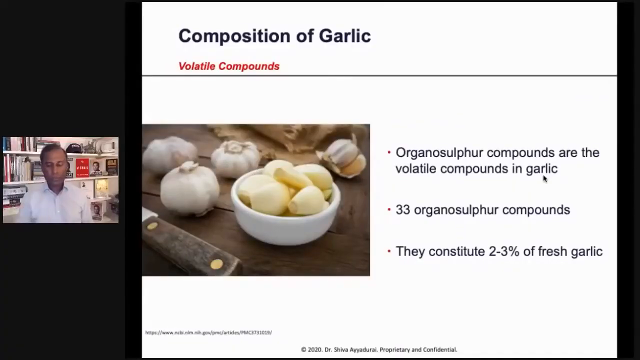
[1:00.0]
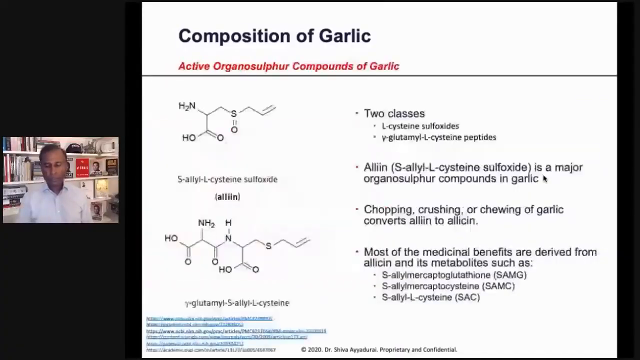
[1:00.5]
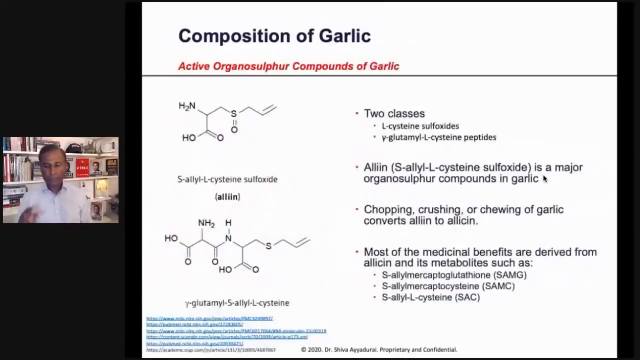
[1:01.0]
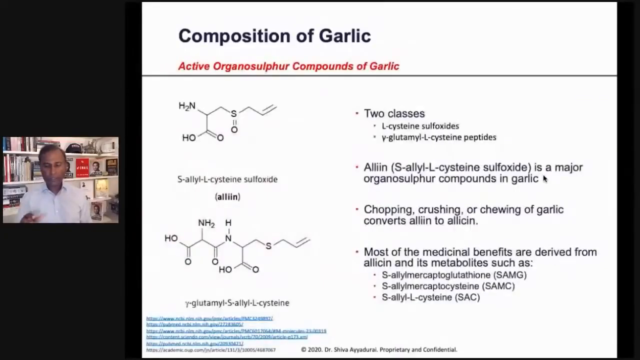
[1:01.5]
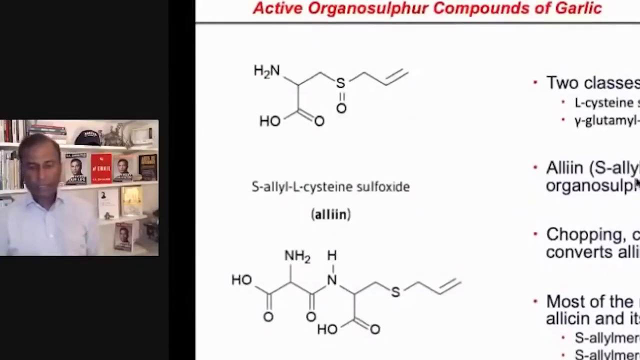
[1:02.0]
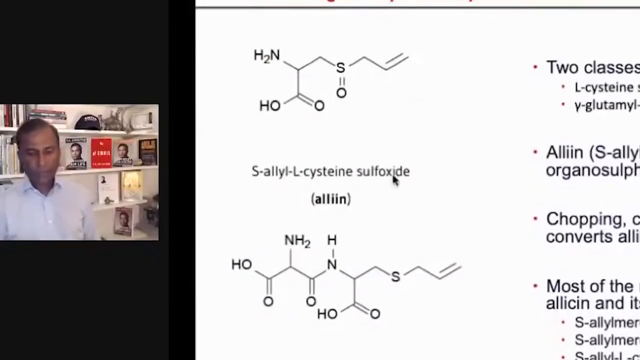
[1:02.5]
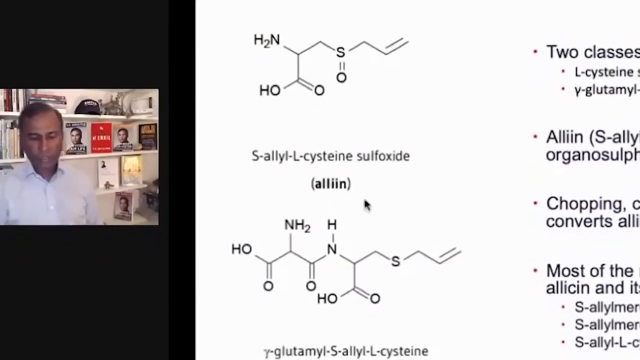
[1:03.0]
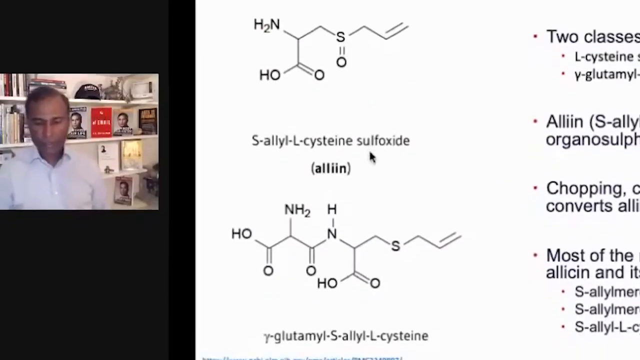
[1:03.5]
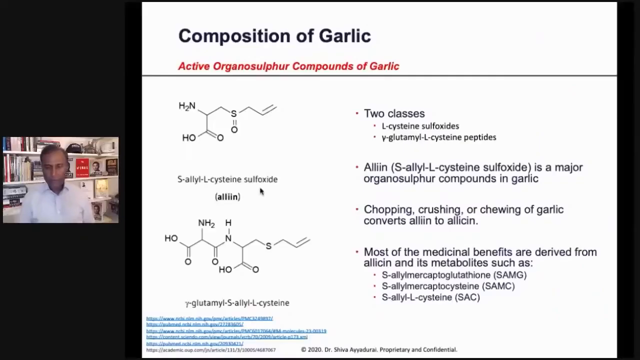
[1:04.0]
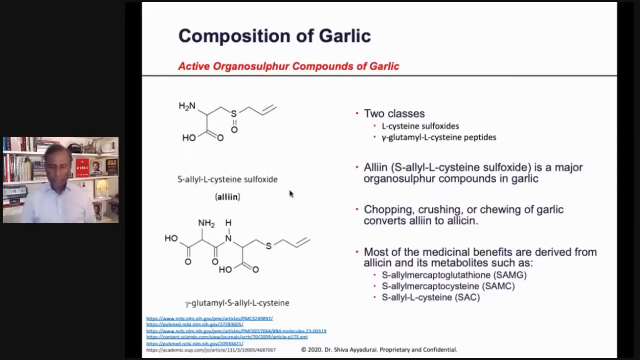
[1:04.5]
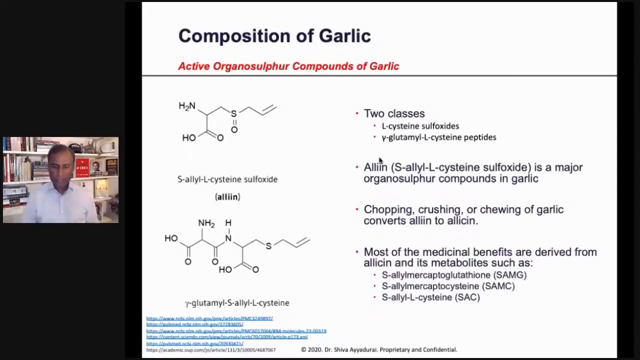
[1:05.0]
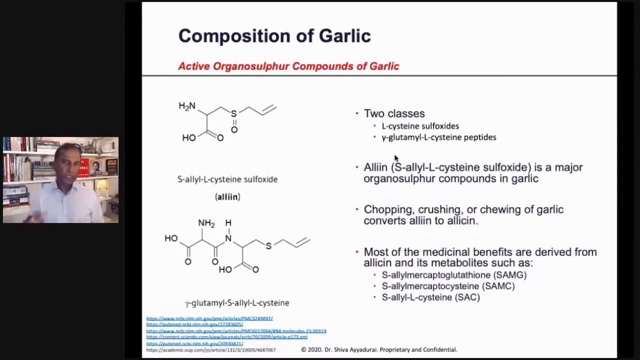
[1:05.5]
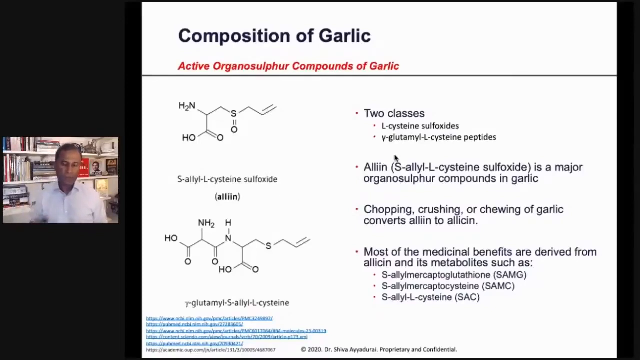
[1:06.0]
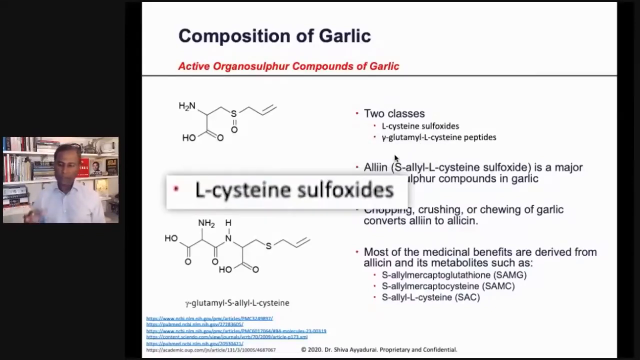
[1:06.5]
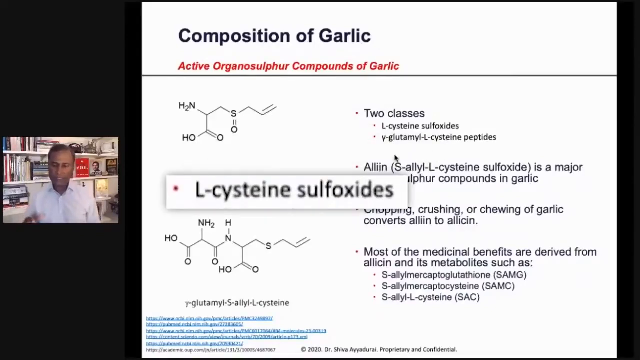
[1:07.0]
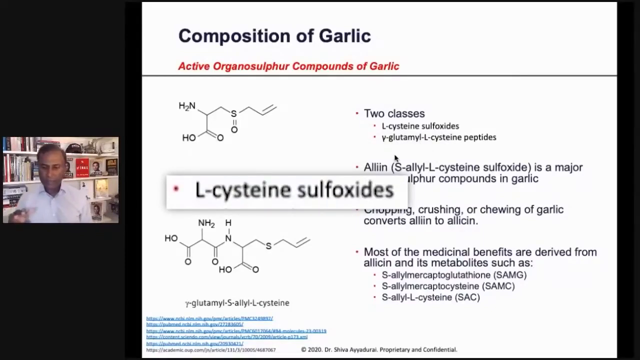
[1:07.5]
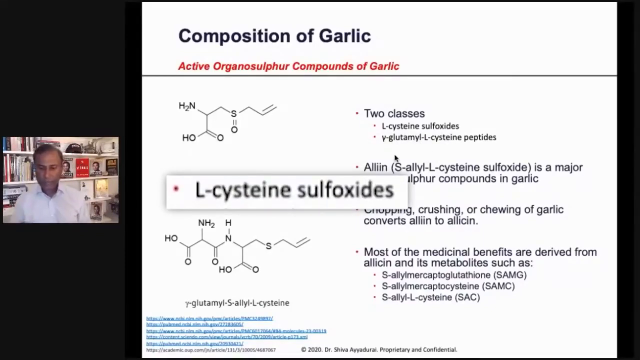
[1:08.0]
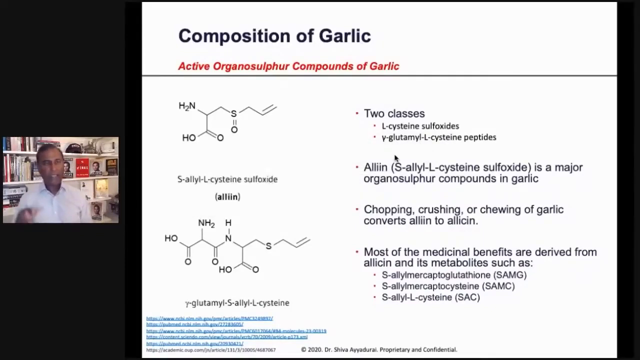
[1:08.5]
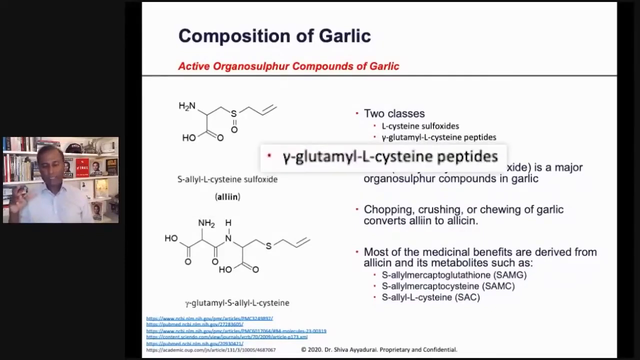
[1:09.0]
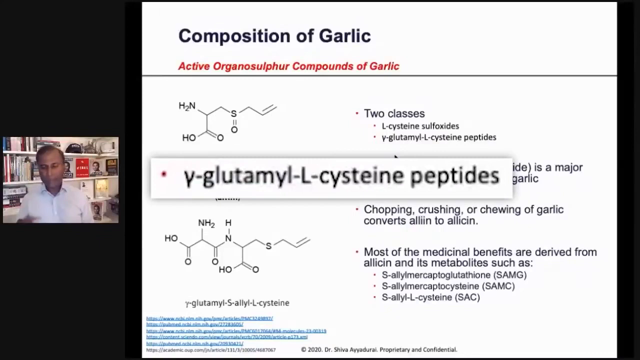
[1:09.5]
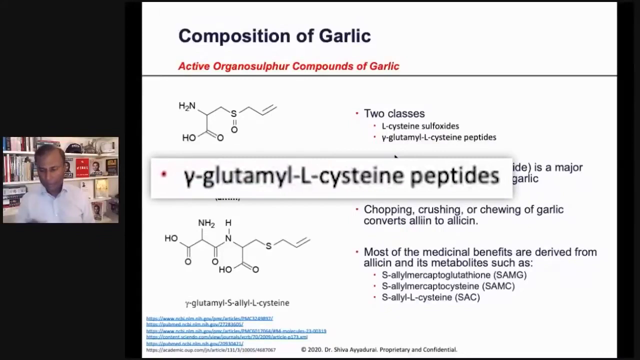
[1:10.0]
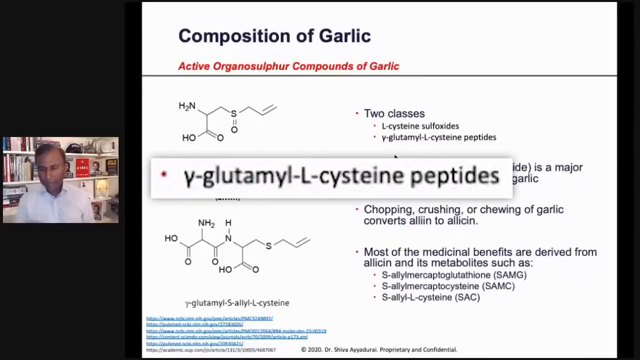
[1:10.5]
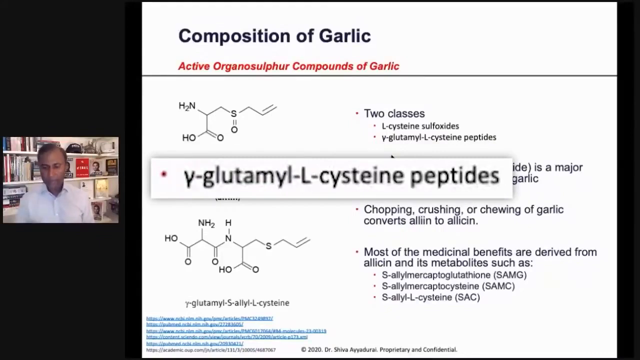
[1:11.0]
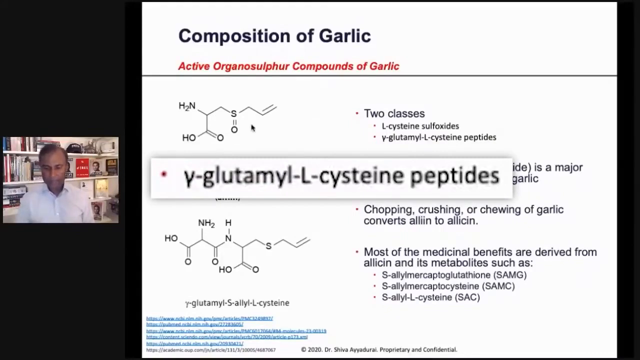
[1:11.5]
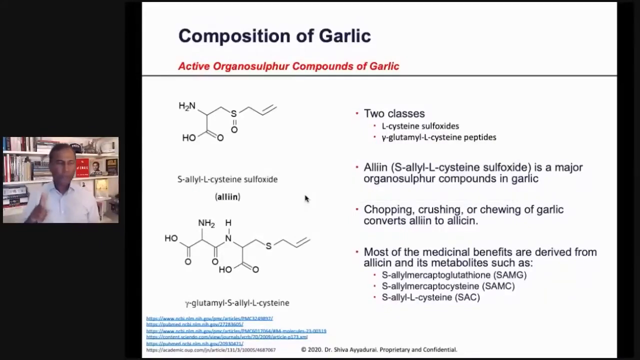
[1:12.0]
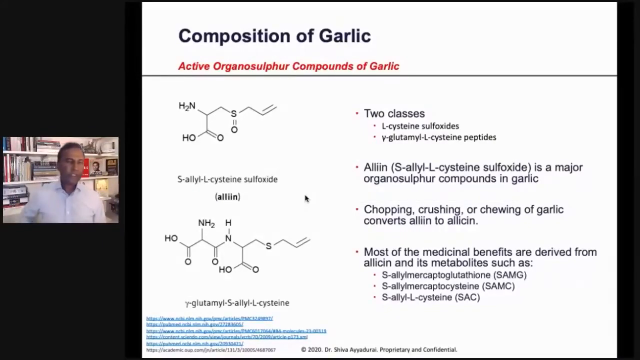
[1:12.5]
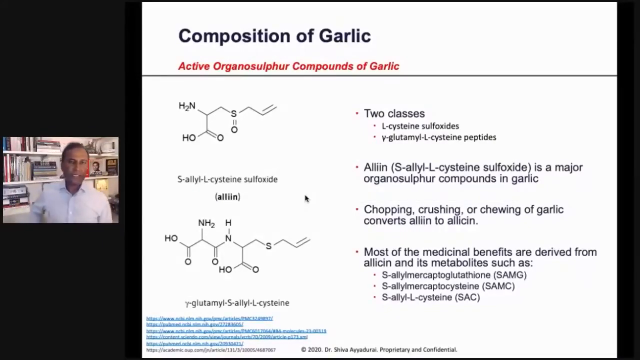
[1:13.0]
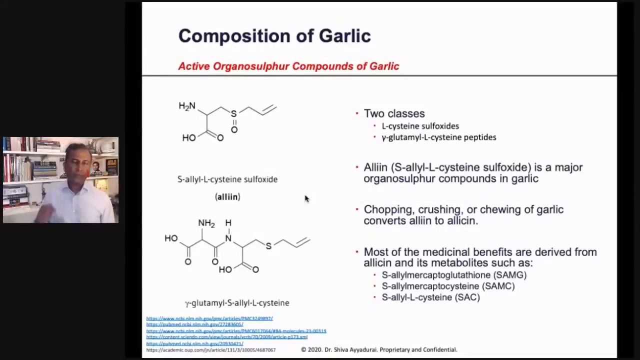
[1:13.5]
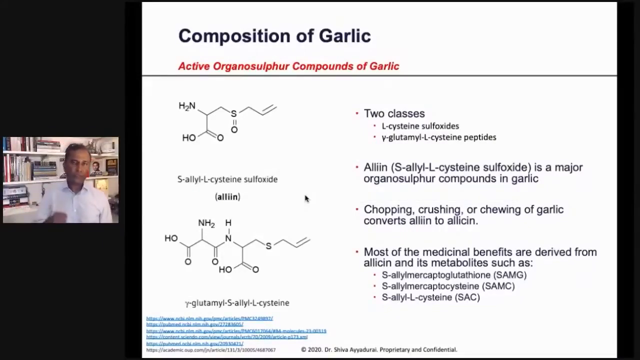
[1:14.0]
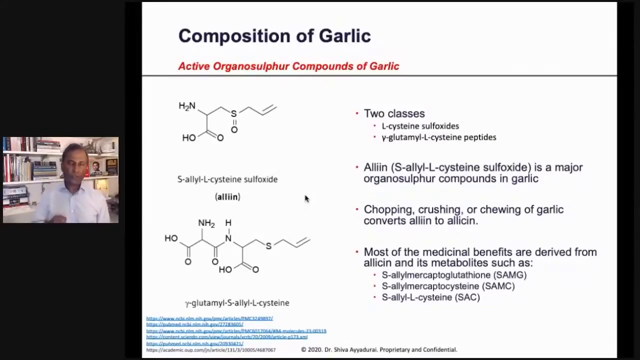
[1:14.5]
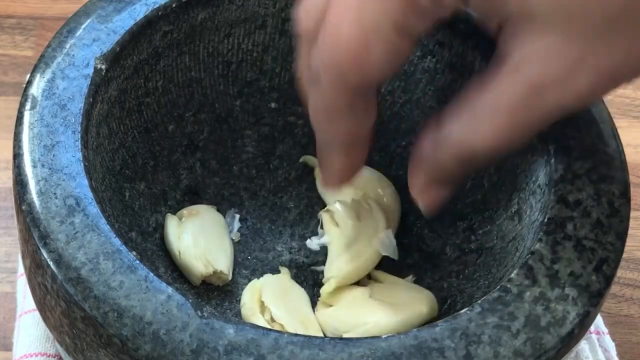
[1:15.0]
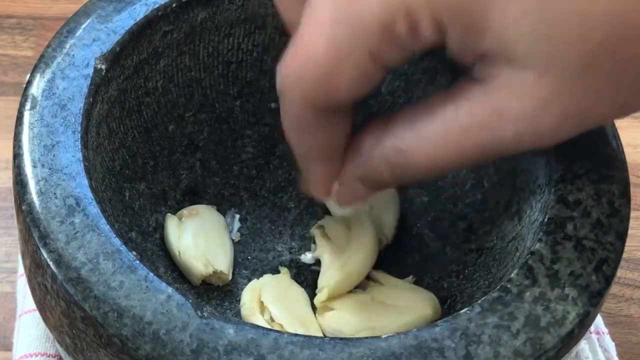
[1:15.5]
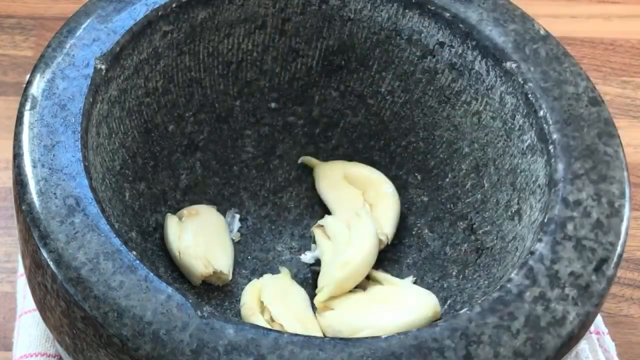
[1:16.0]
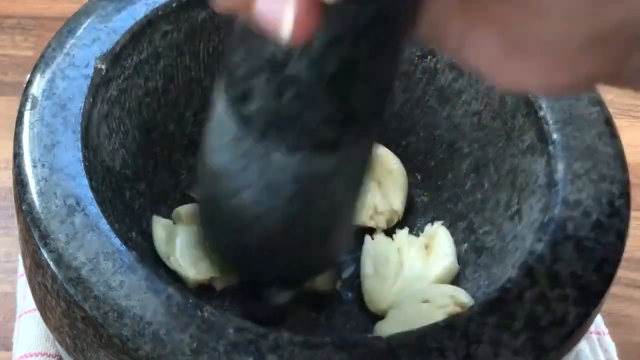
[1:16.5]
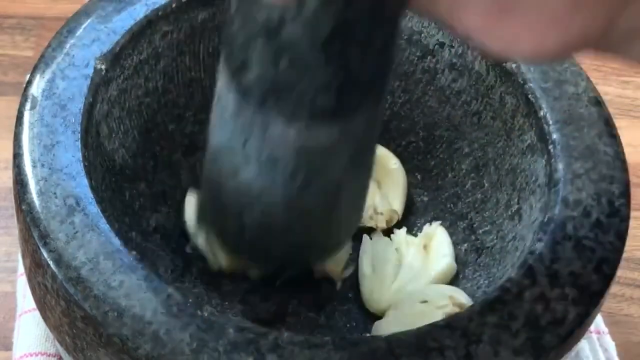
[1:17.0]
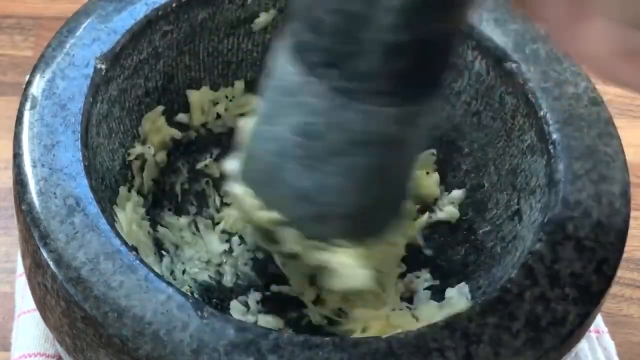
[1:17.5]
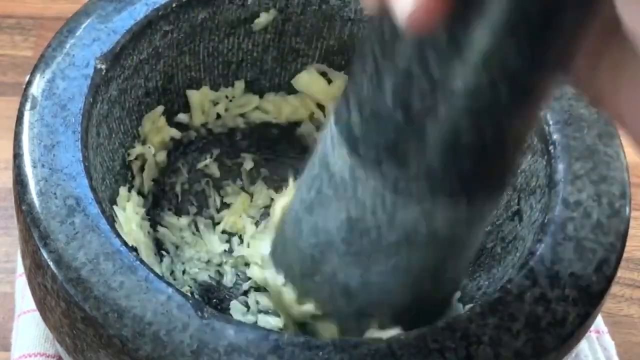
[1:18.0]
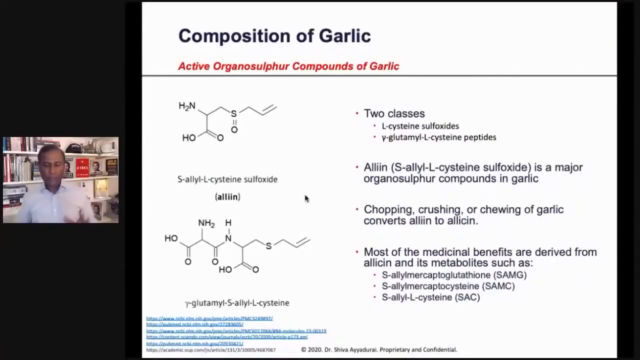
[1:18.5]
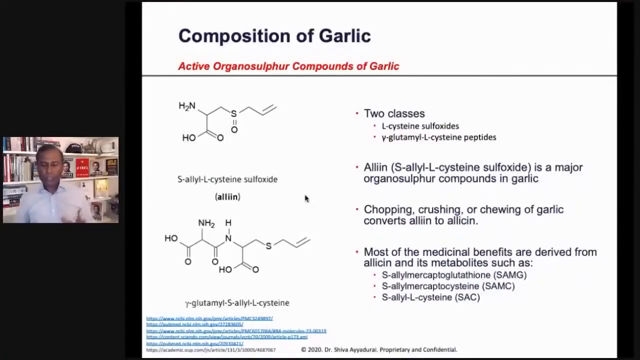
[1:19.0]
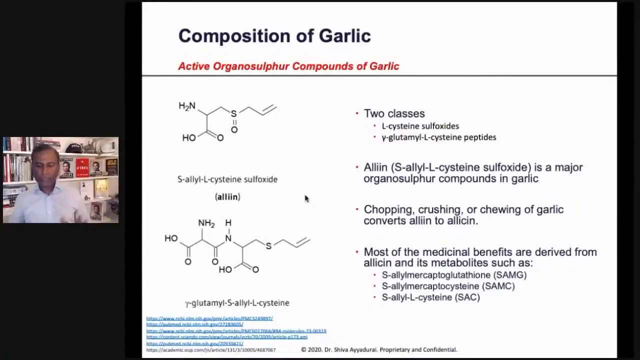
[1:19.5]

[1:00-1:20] The page changes again; this time the red subtitle under the composition of garlic title is "active organosulphur compounds of garlic". Underneath is the chemical composition of the substances, and on the right a four-point section. The first point reads "Two classes", the second "Alliin (S-allyl-L-cysteine sulfoxide) is a major organosulphur compounds in garlic", the third "chopping, crushing, or chewing of garlic converts alliin to allicin", and the last "most of the medicinal benefits are derived from allicin and its metabolites." The video zooms in on the chemical compositions and pans down slowly. It returns to the full-size image, and a close-up of part of the text appears on top of the PowerPoint page, reading "L-cysteine sulfoxides". That close-up disappears and another appears, reading "Y-glutamyl L-cysteine peptides", then disappears as well. The video then changes to a shot of a granite bowl in which garlic slices are being smashed very finely with a mortar.